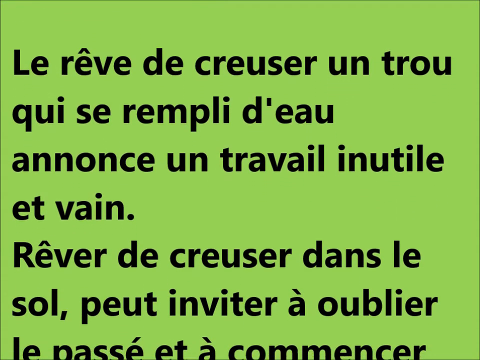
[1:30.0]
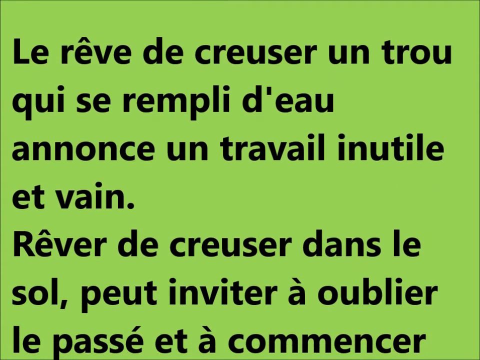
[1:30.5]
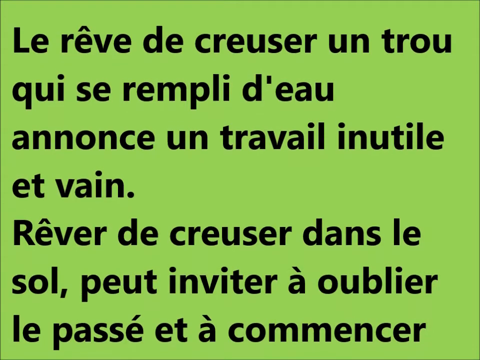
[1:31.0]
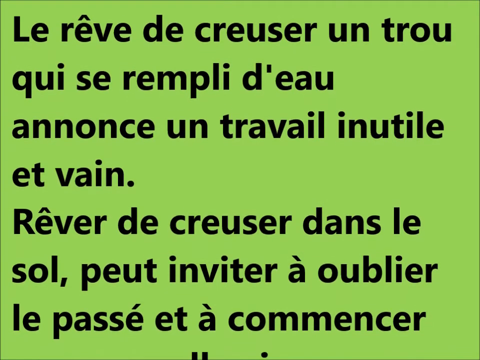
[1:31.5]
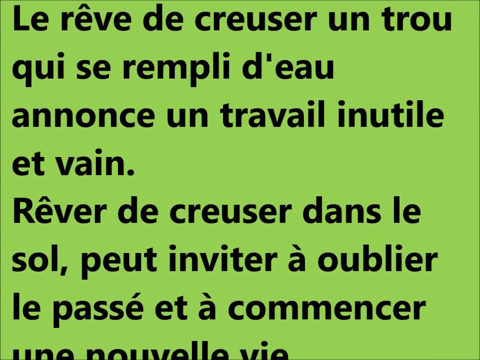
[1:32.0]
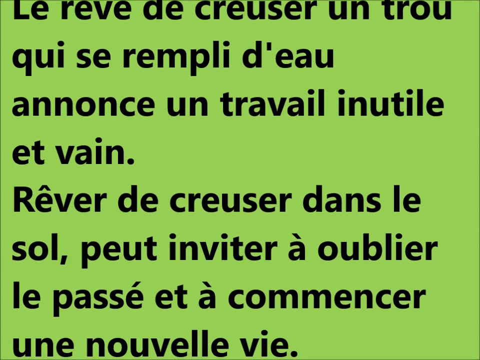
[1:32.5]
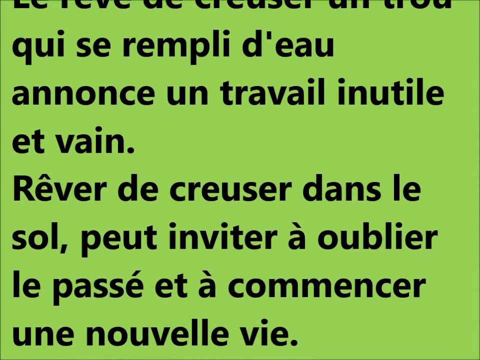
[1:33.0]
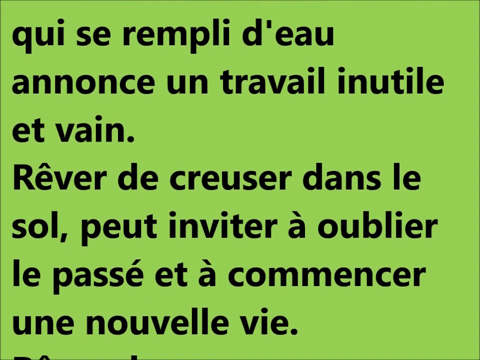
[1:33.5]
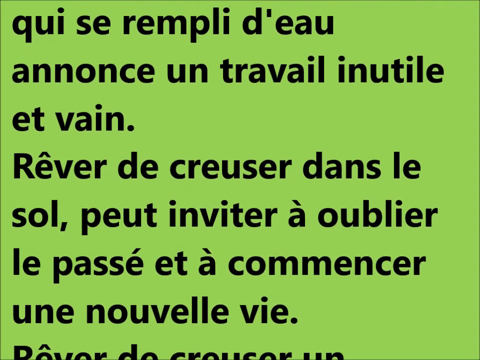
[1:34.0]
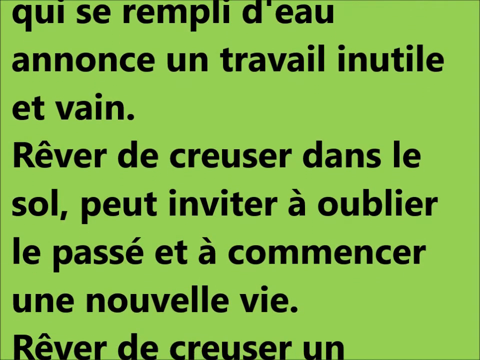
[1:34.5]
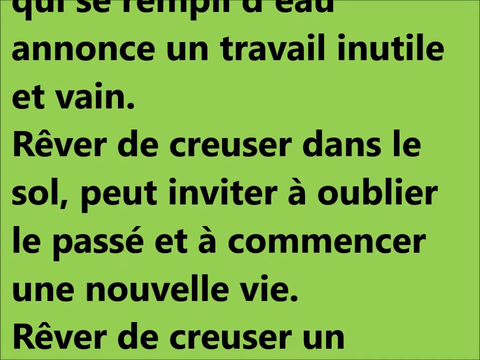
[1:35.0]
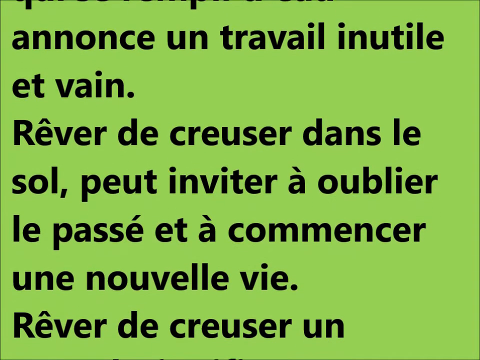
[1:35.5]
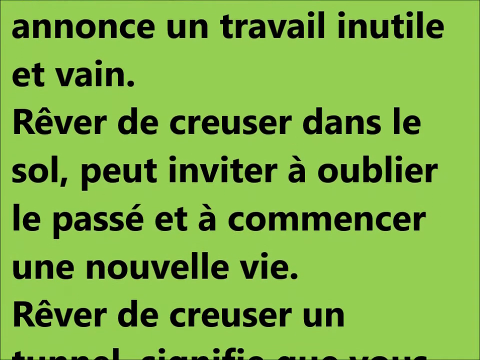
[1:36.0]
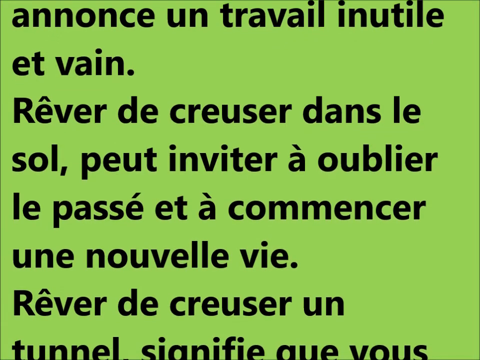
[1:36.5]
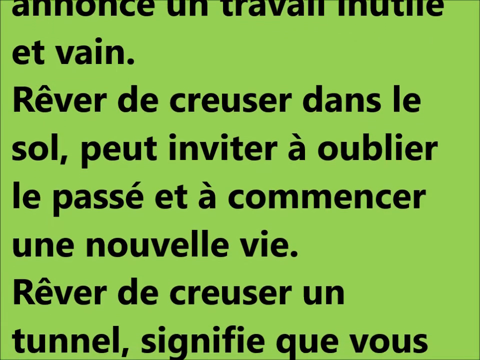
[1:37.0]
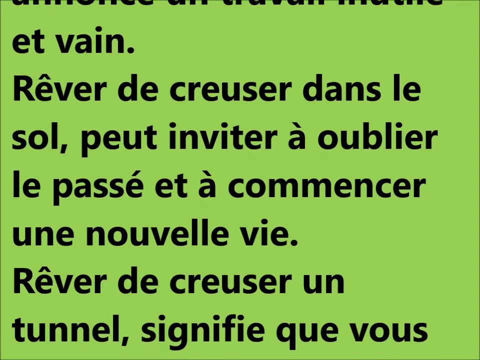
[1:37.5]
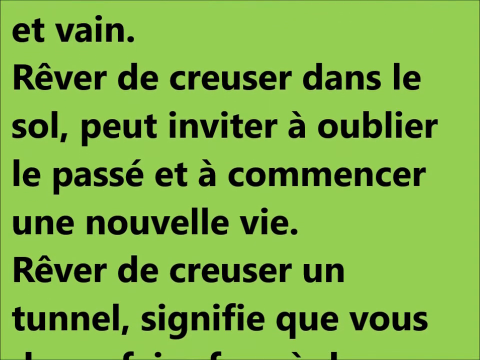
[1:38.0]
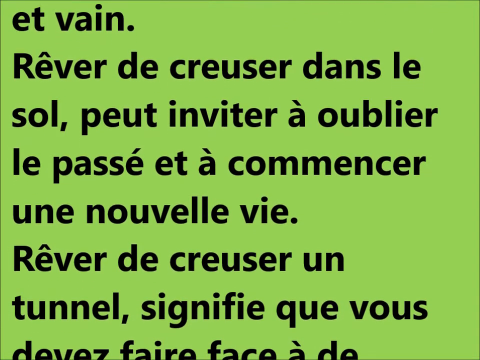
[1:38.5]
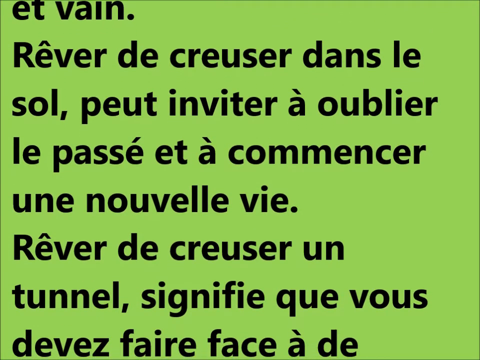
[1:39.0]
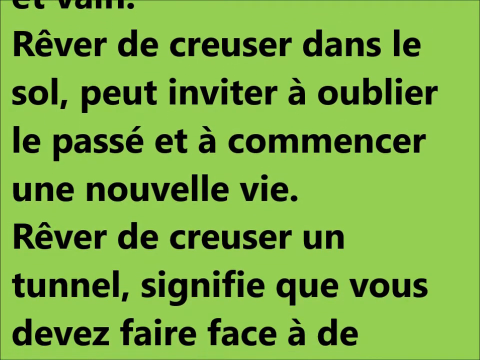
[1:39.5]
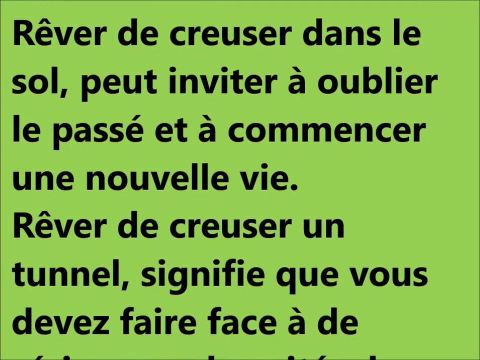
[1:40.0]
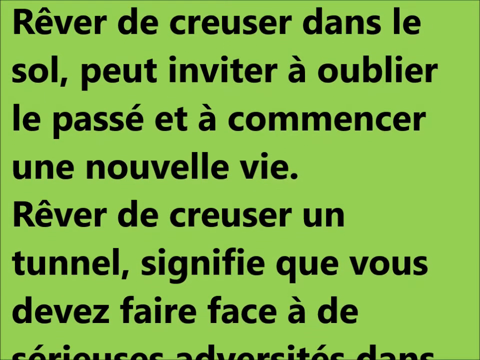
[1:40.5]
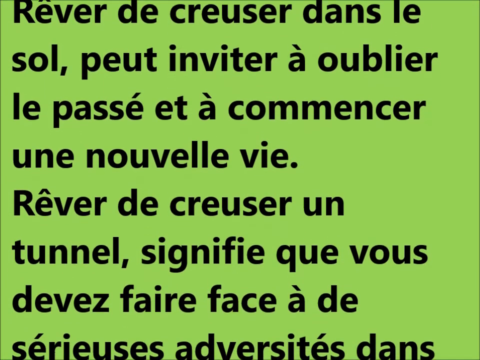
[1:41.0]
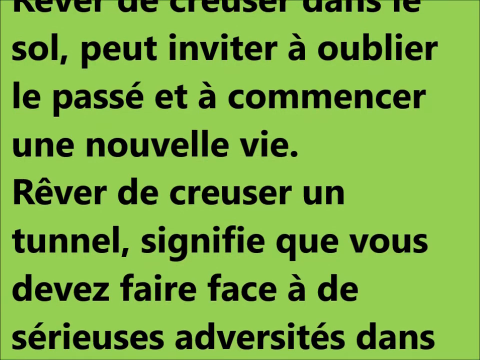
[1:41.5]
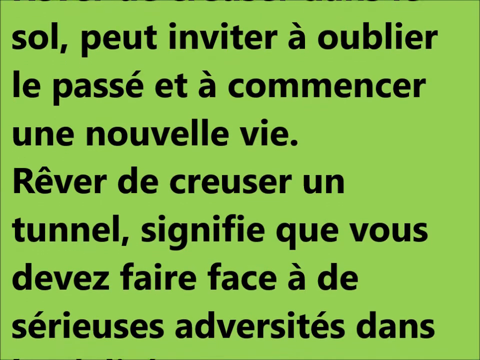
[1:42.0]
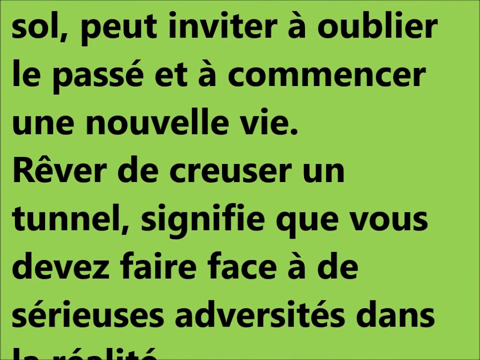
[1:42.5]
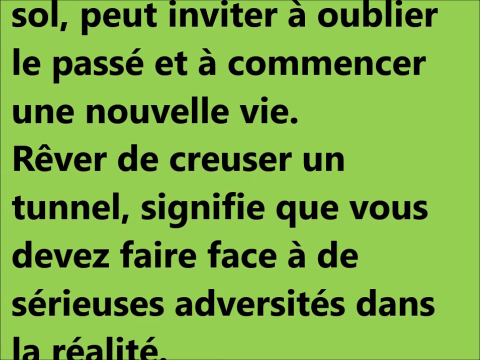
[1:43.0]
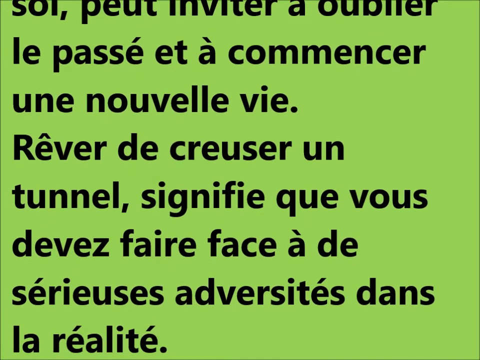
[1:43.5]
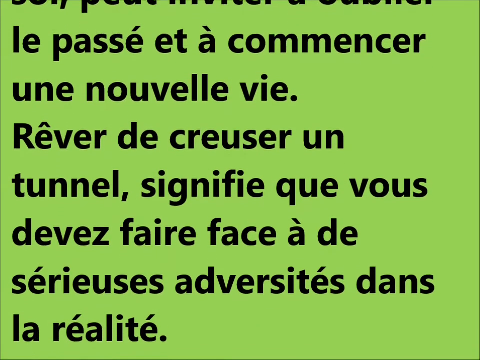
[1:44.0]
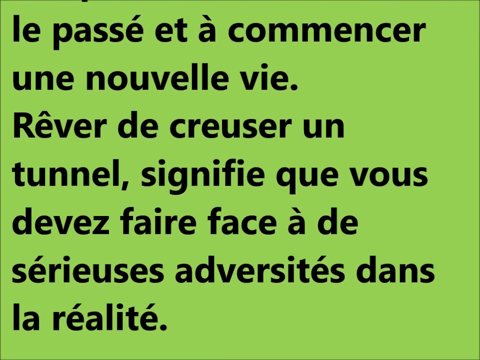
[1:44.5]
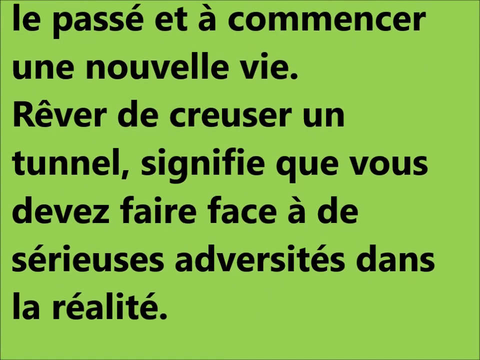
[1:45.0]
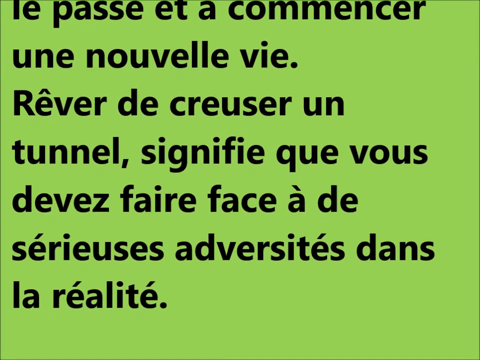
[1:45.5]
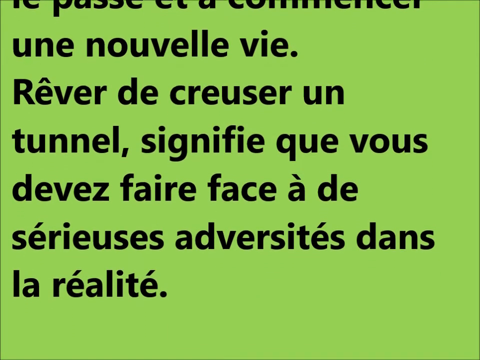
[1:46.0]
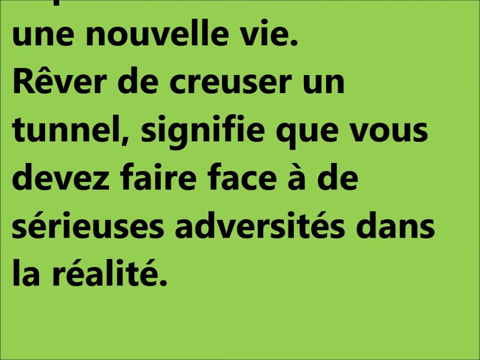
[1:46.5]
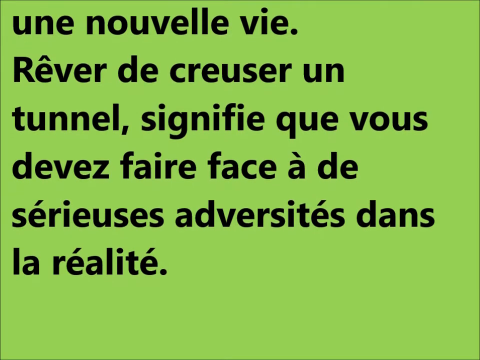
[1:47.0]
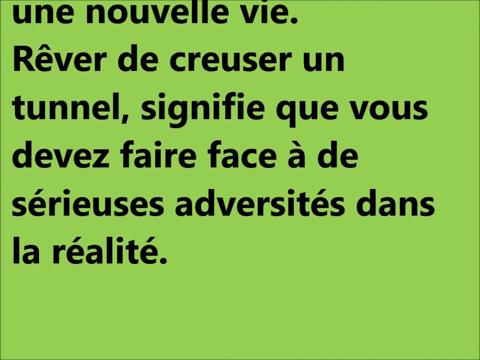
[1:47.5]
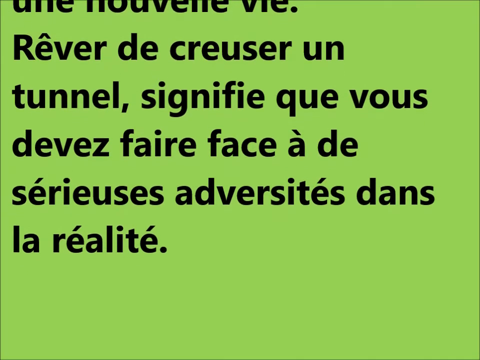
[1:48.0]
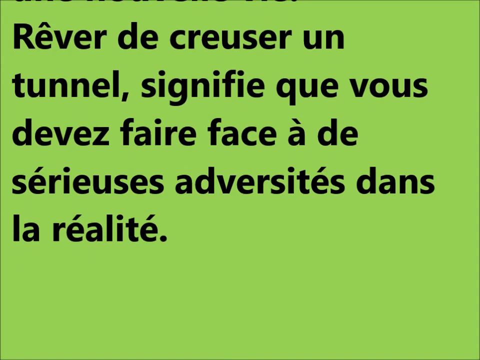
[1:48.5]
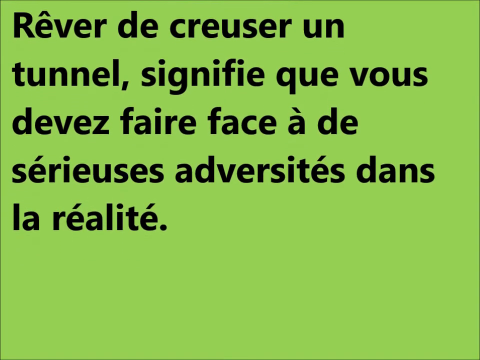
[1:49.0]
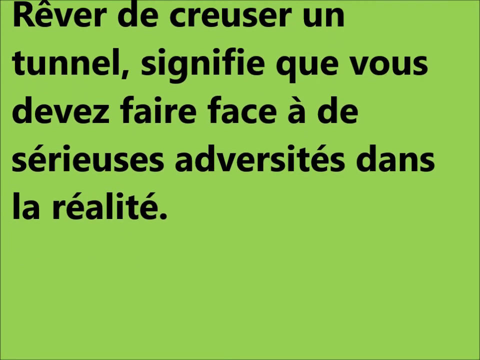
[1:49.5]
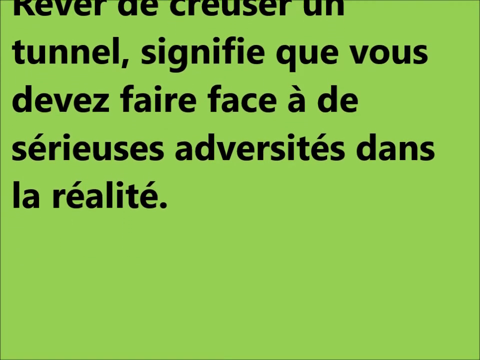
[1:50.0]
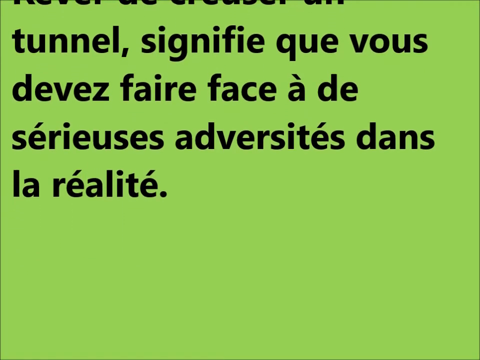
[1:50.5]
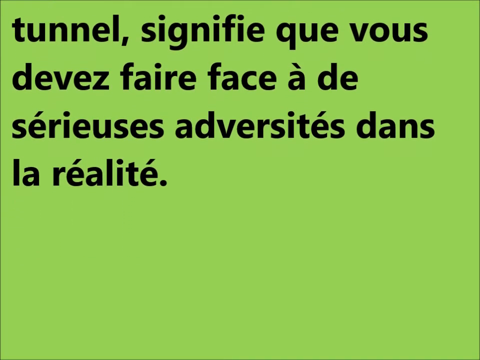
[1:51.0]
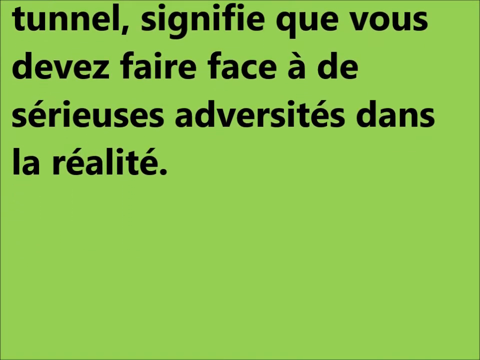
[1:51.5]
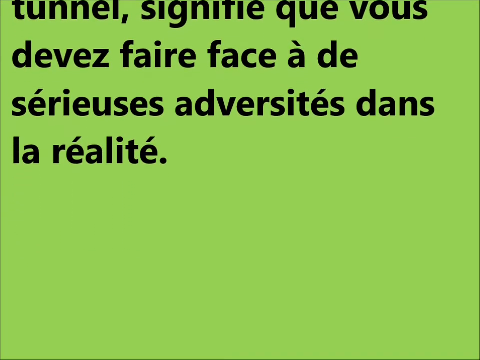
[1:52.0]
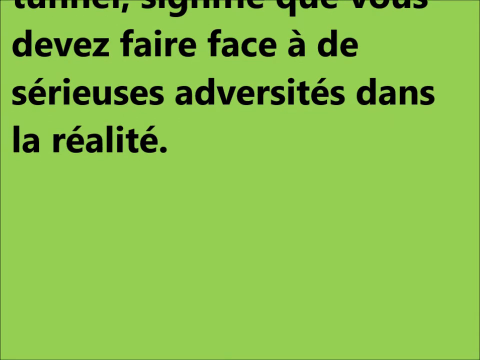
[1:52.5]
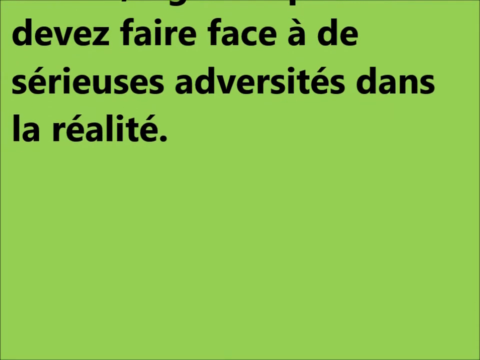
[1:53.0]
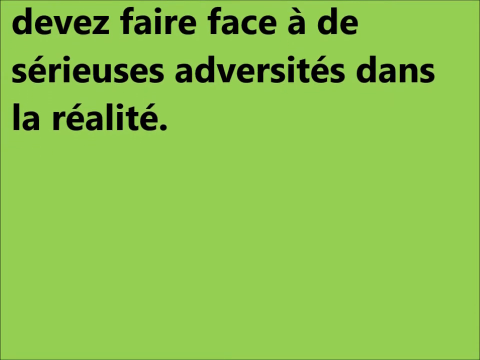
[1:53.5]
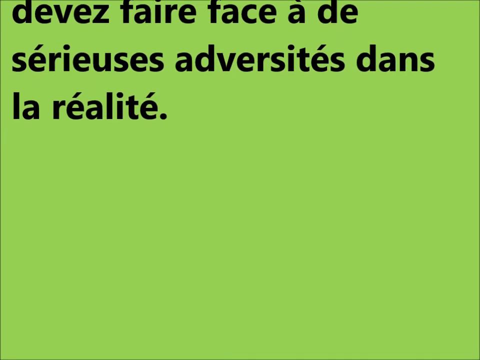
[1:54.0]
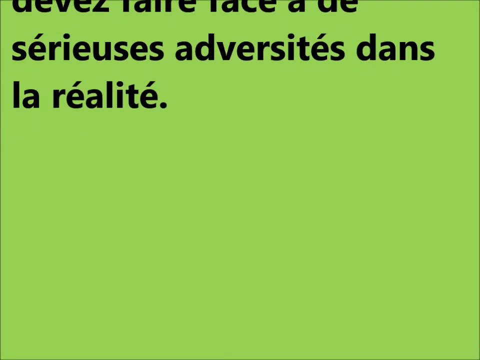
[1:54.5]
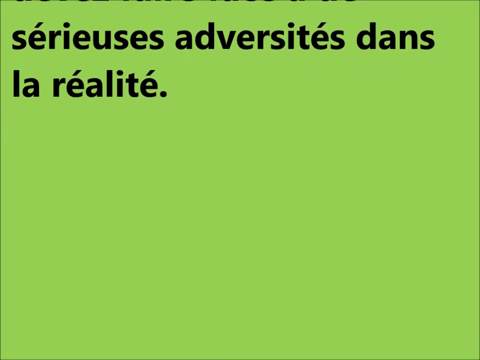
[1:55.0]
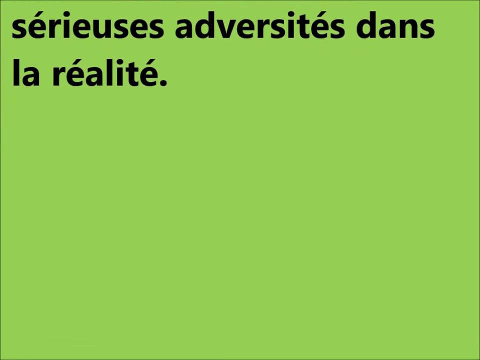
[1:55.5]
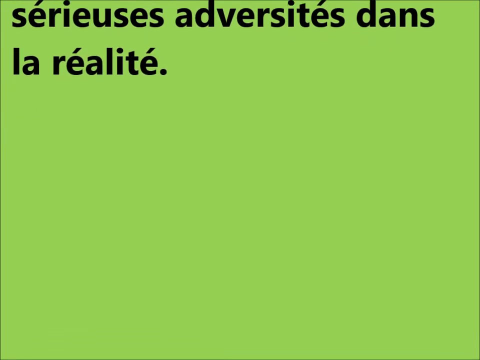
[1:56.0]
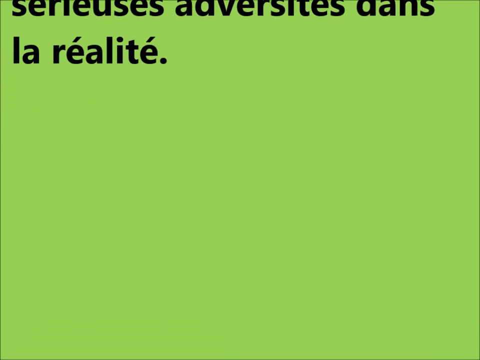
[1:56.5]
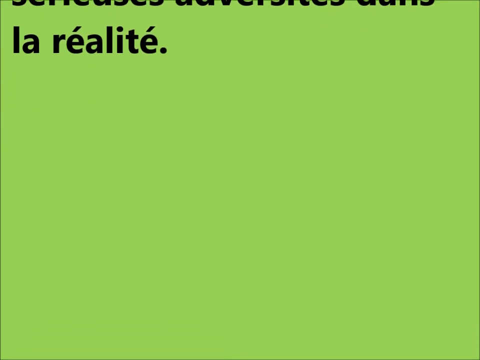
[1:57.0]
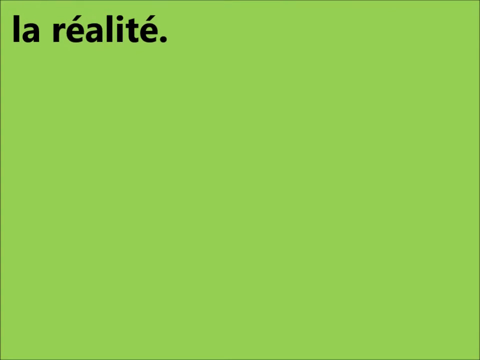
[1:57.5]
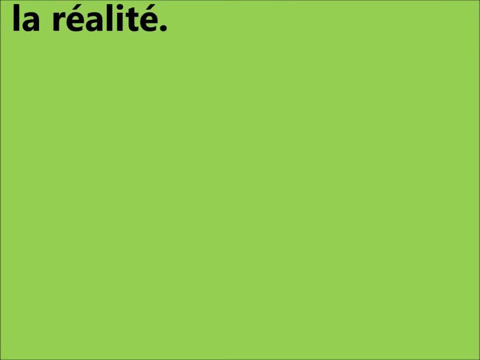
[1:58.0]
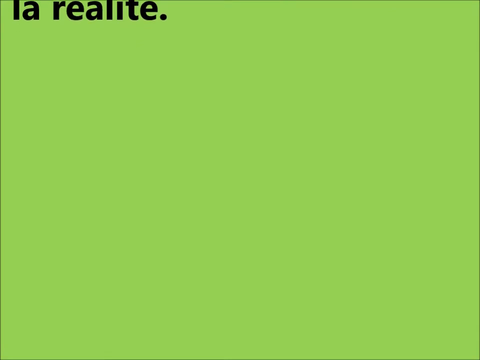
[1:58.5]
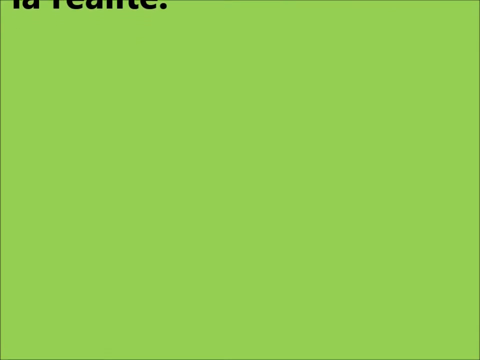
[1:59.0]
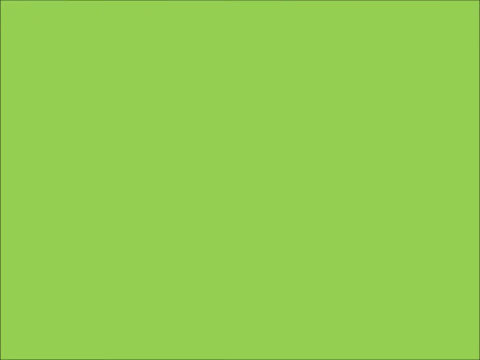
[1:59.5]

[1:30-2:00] Bold, dark black text scrolls upward from the bottom to the top over a green background, making up most of the shot. The text concerns a dream called a "reve de creuser", which seems to be very important: it unveils key truths about the individual, often represents a problem the individual will have in life, and indicates that understanding and interpreting this type of dream can solve the main adversities in one's life. The visuals are computer-generated, with no real-world setting.